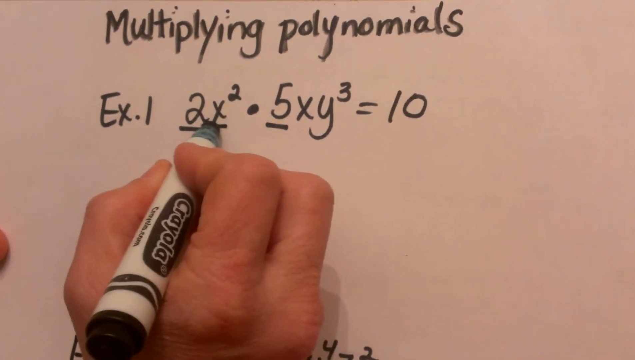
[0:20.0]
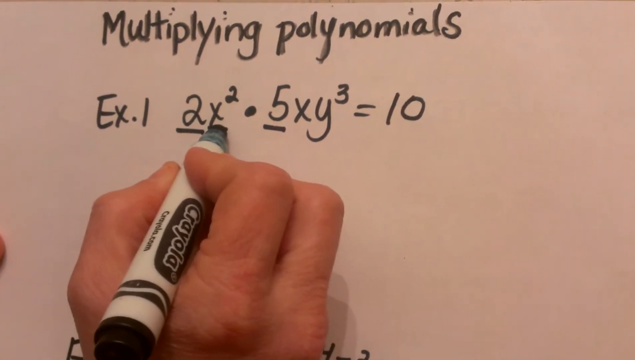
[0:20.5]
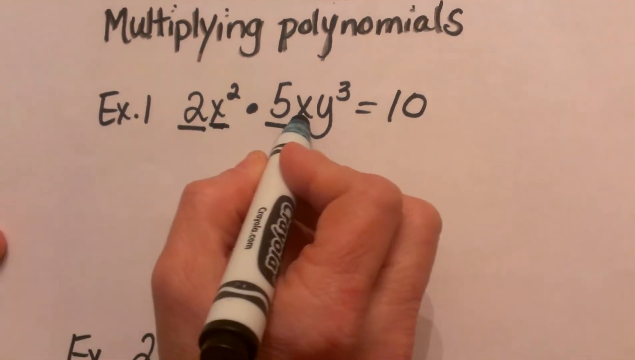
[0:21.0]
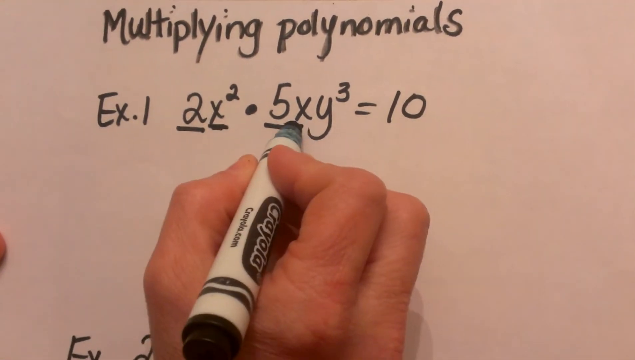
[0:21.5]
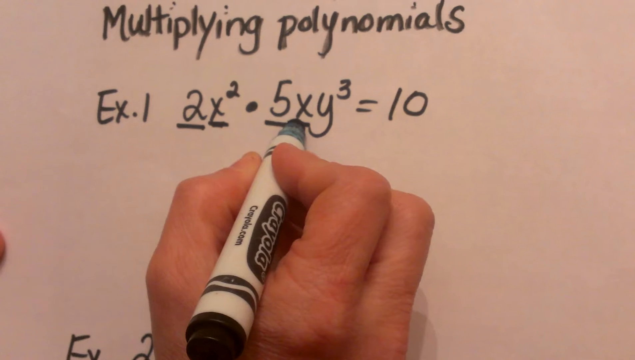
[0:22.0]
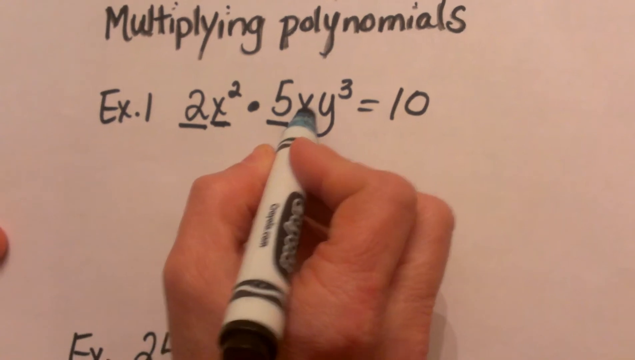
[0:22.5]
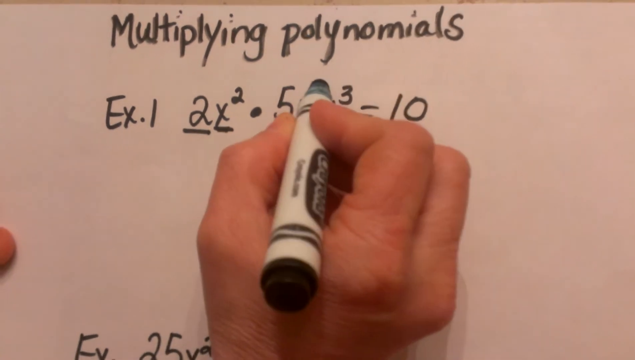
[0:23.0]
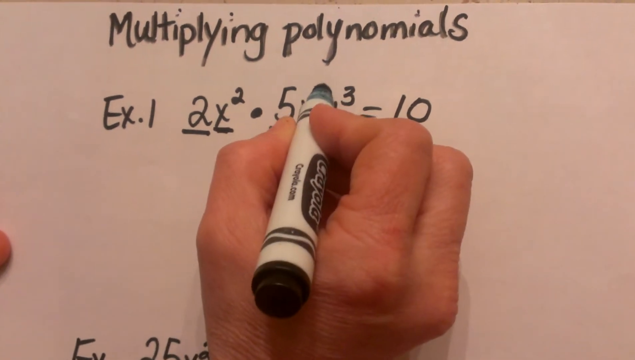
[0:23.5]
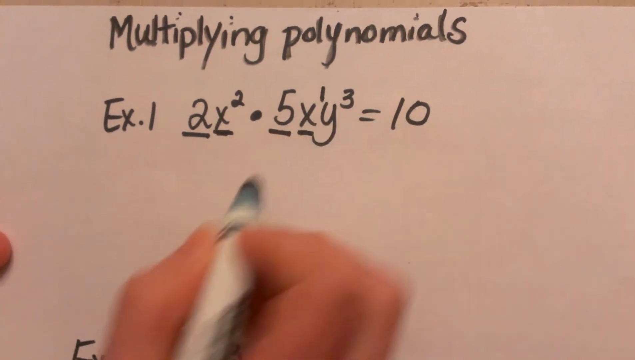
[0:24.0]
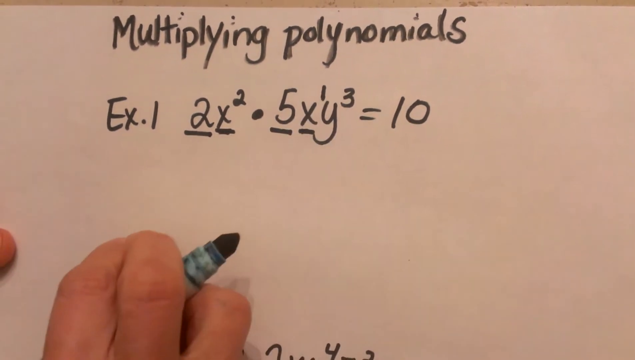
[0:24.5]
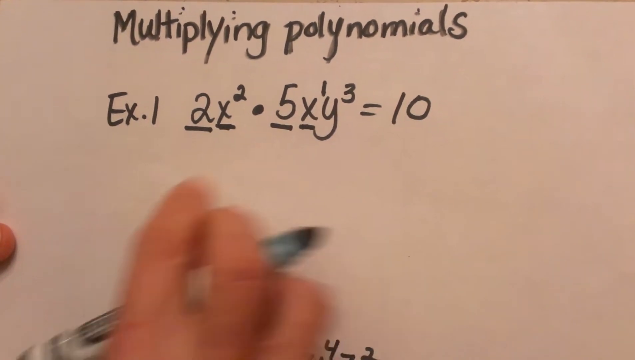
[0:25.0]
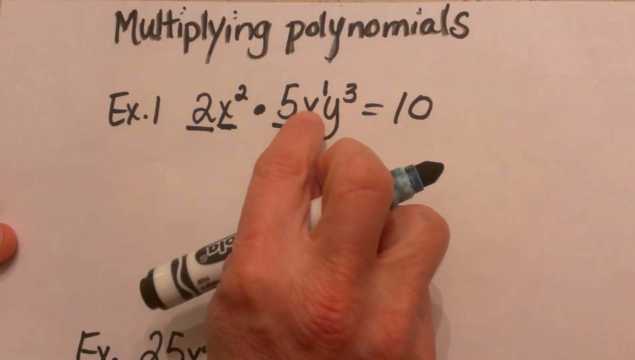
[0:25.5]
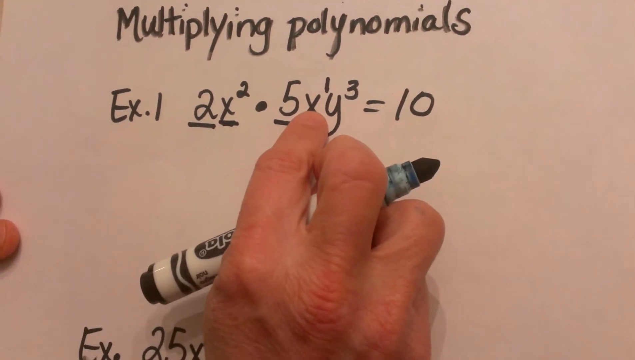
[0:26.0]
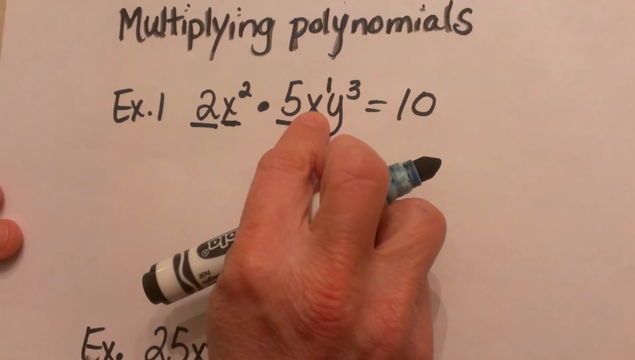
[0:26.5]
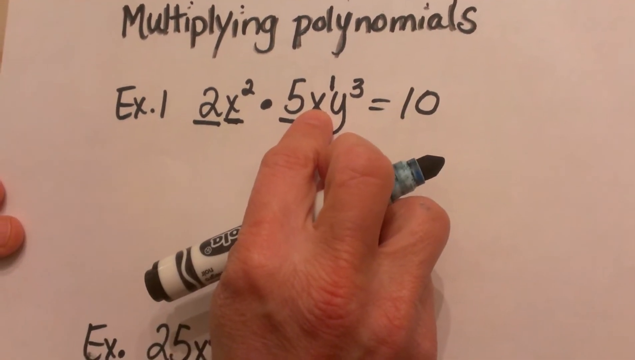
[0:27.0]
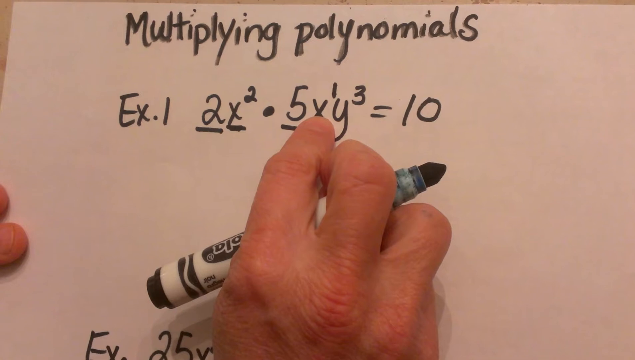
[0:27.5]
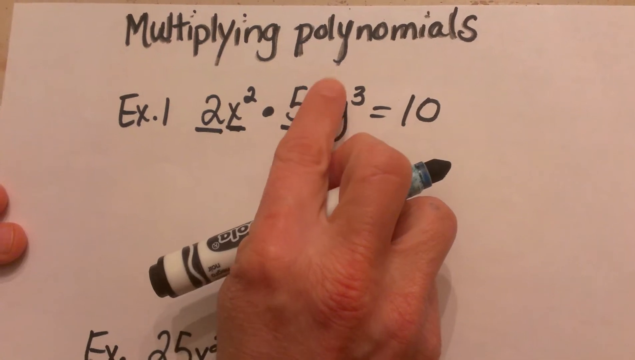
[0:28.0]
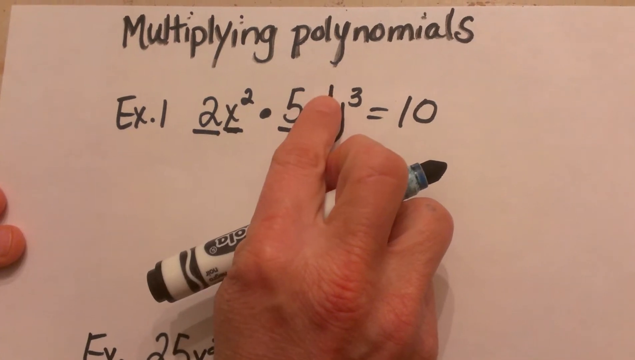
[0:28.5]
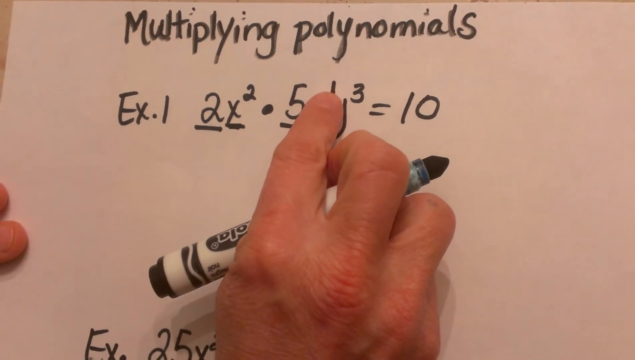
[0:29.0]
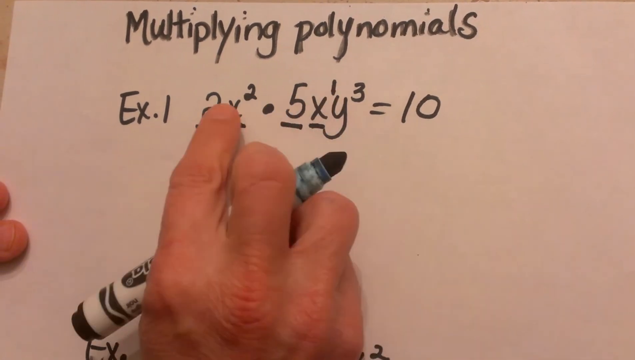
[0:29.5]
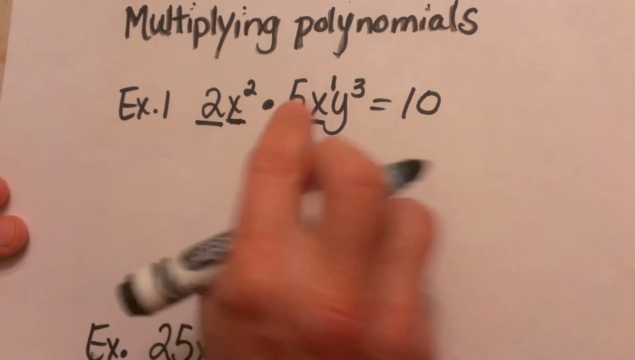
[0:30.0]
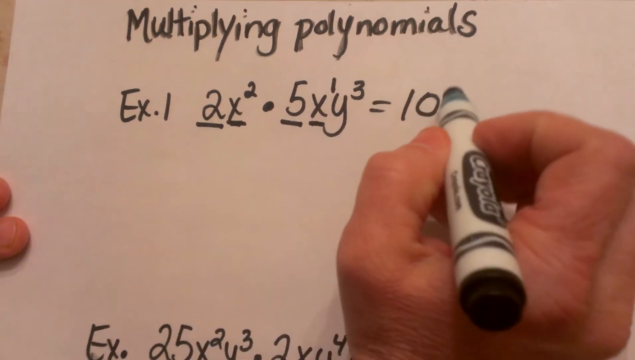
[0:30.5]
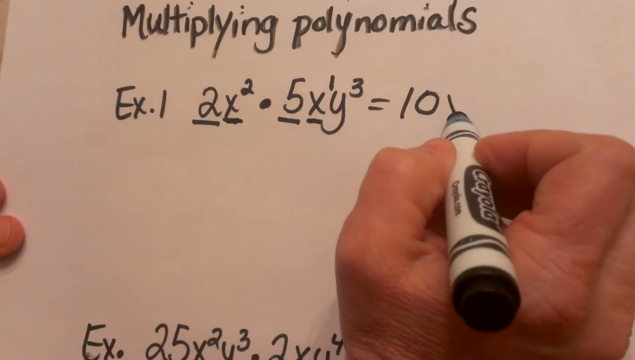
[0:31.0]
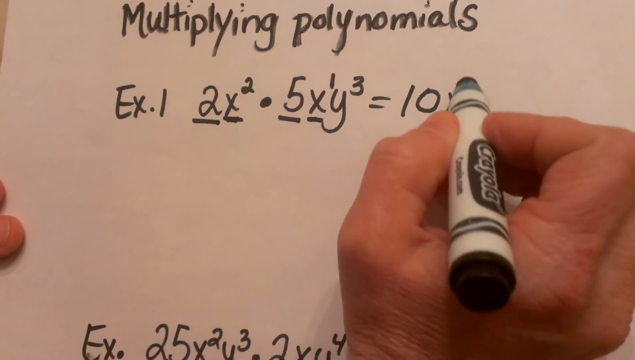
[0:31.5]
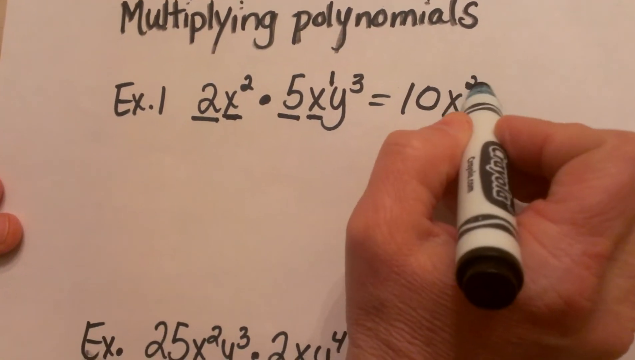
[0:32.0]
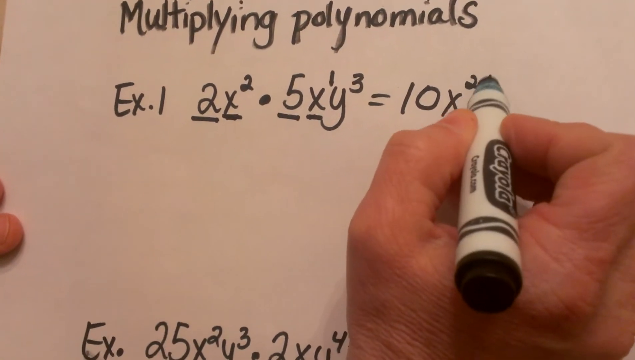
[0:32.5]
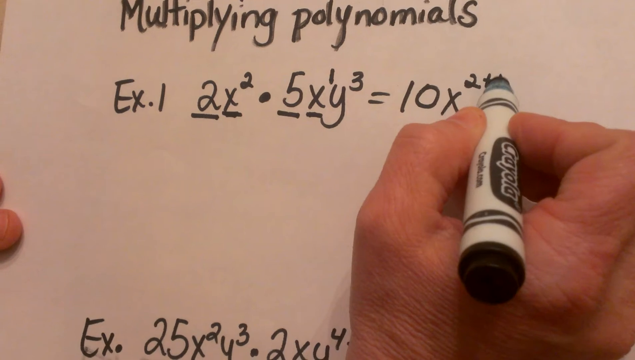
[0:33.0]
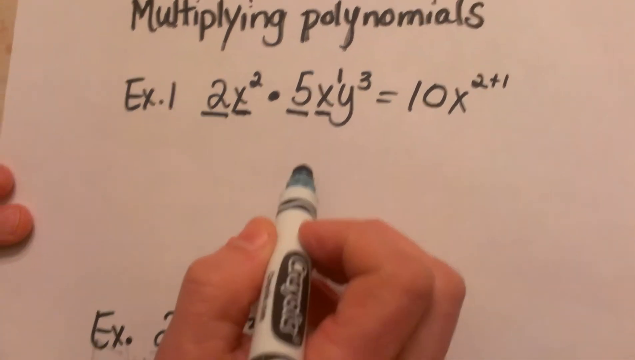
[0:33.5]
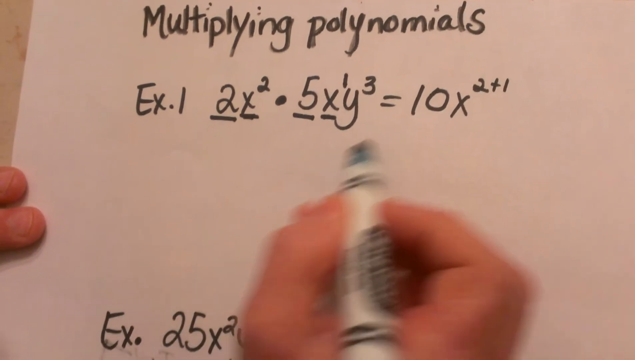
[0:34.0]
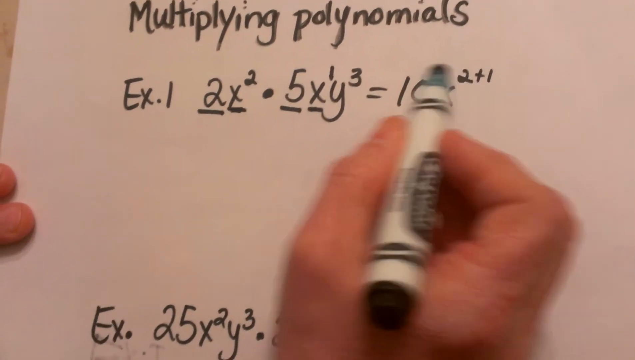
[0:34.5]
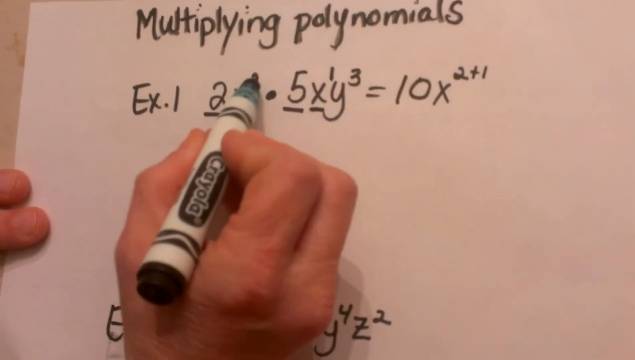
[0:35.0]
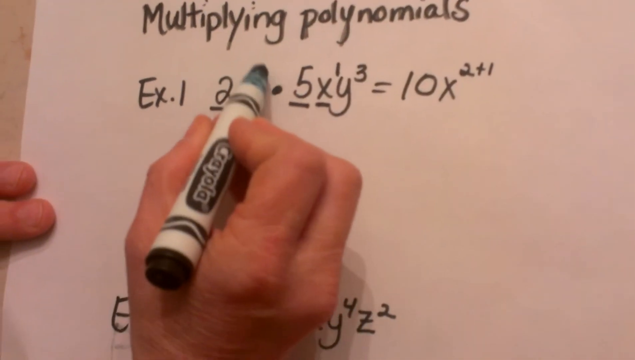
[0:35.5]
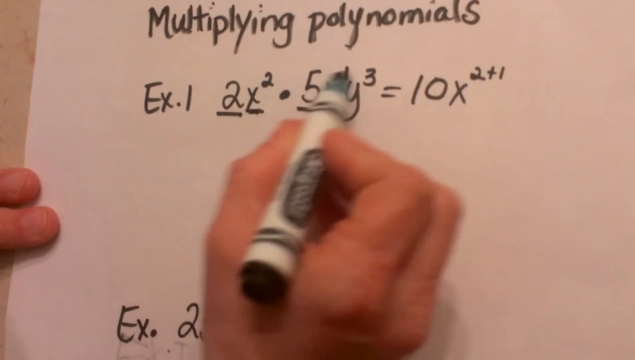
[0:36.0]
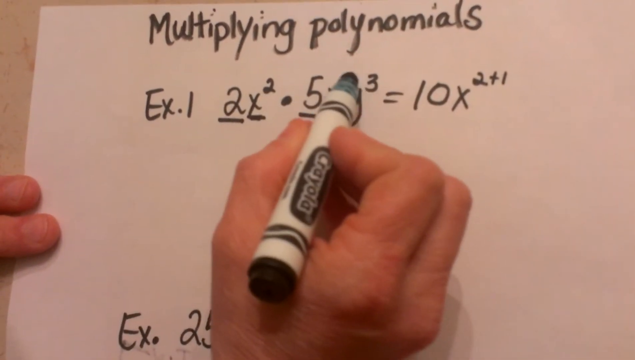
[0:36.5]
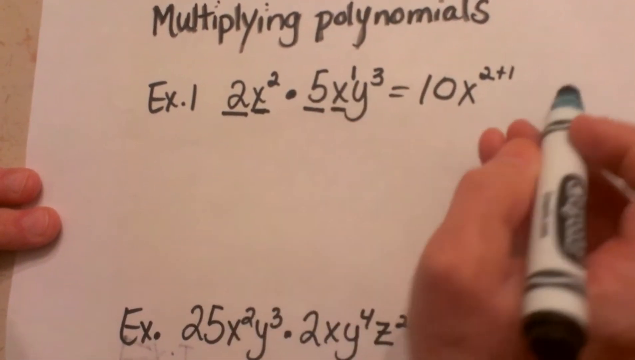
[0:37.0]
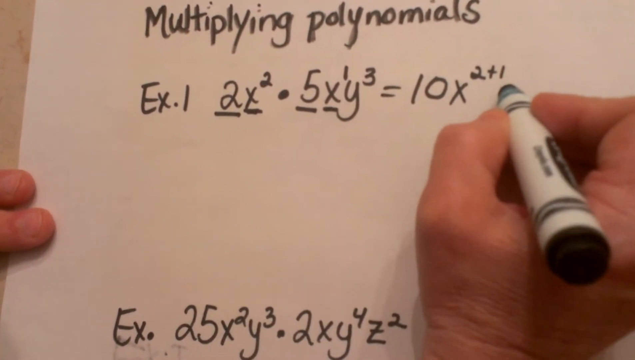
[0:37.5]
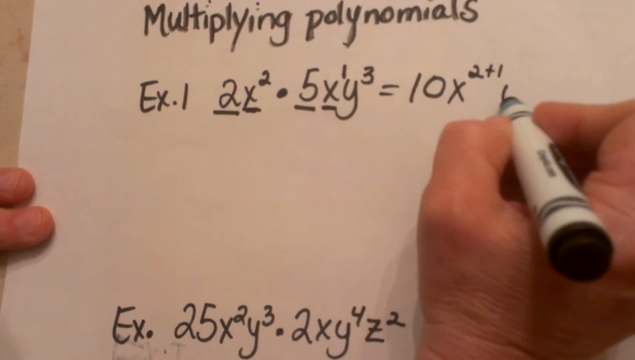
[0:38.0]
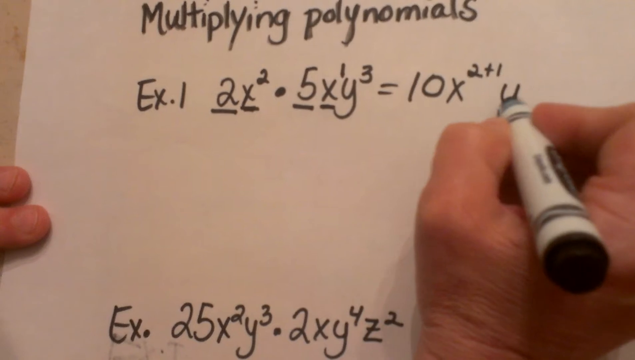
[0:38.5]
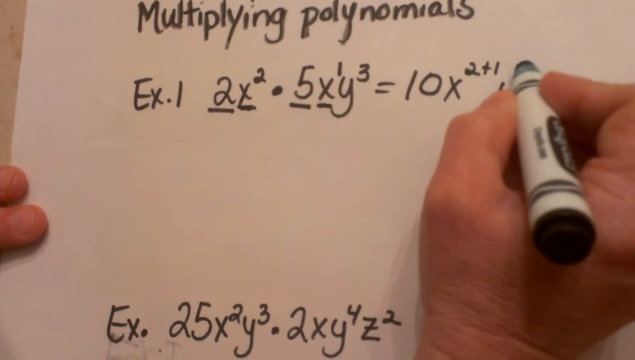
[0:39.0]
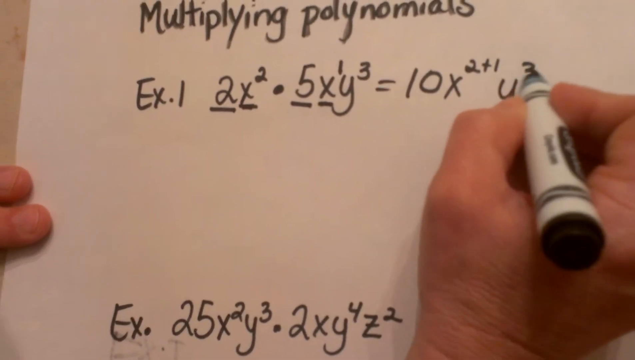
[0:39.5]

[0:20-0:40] The multiplying polynomials problem continues. The facilitator underlines the variable x and the other x, then writes a one on top of the x and a two. The work shows 10x raised to the power 2 plus 1, along with y raised to the power 3.